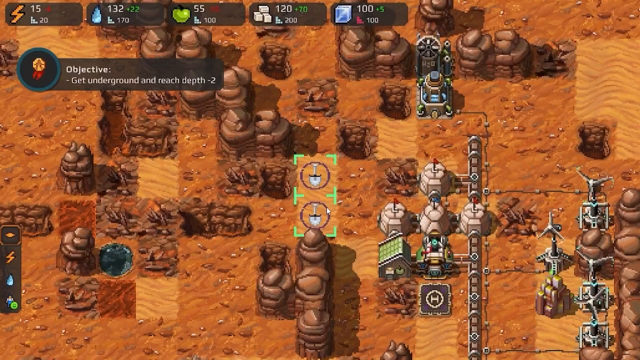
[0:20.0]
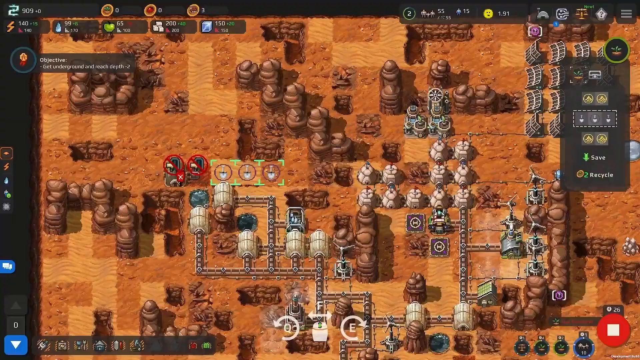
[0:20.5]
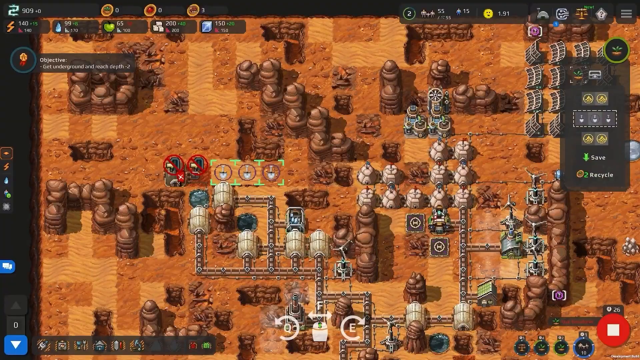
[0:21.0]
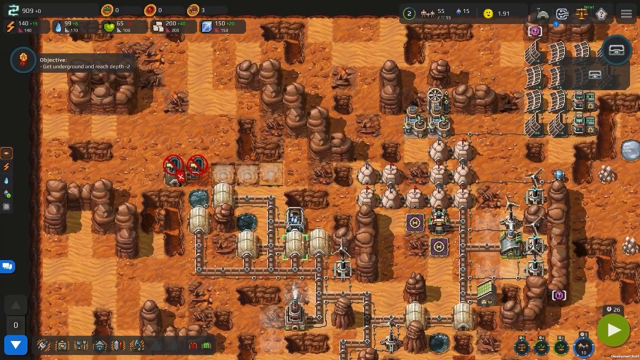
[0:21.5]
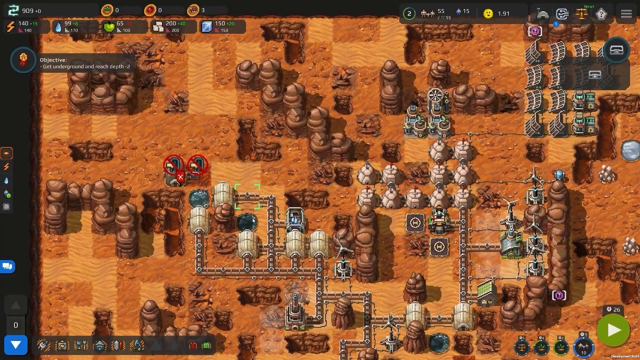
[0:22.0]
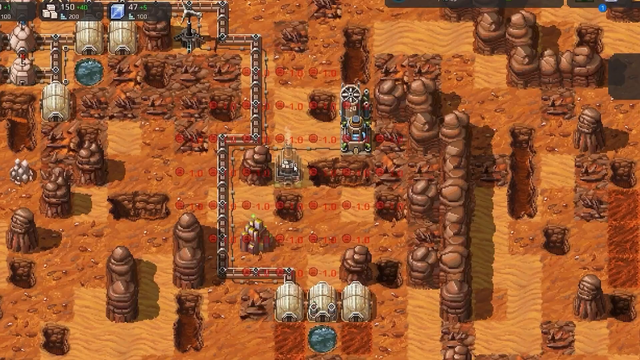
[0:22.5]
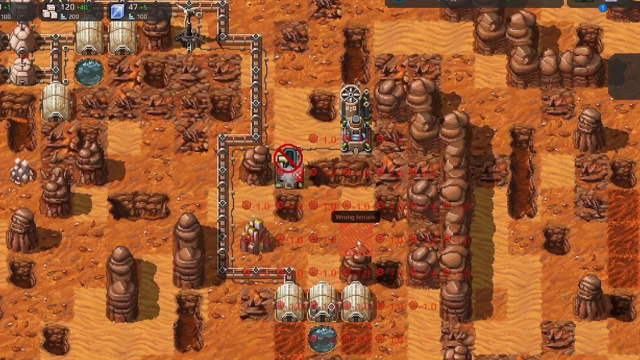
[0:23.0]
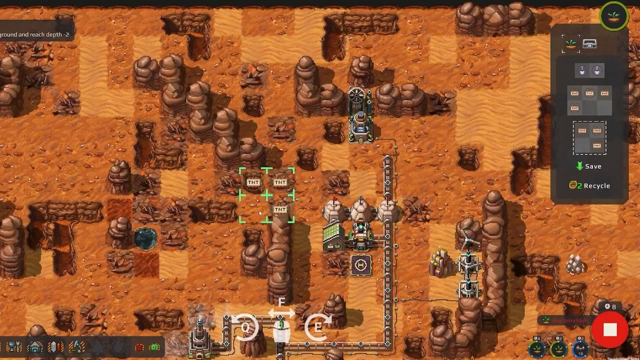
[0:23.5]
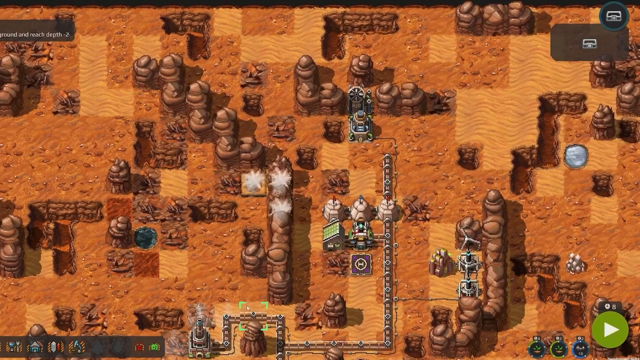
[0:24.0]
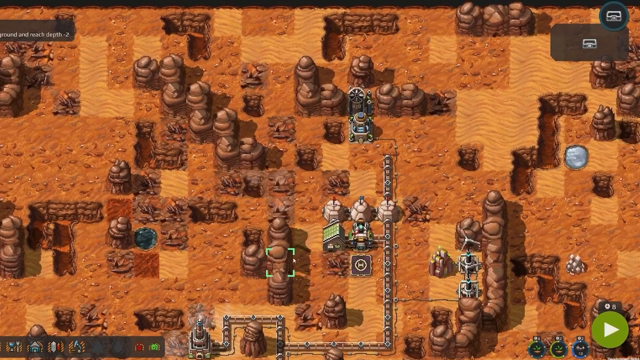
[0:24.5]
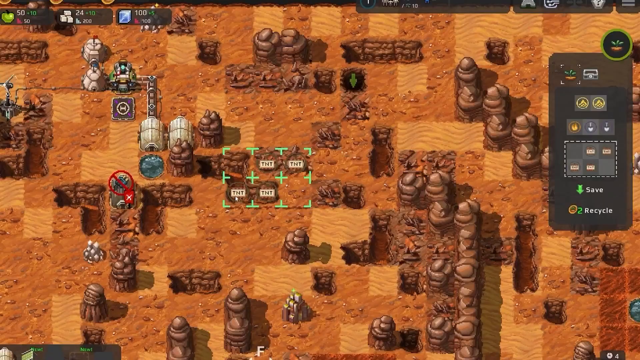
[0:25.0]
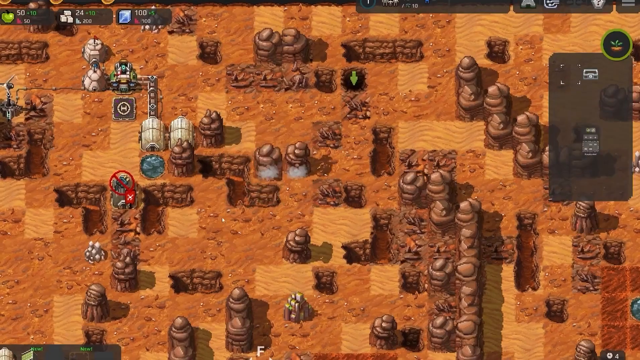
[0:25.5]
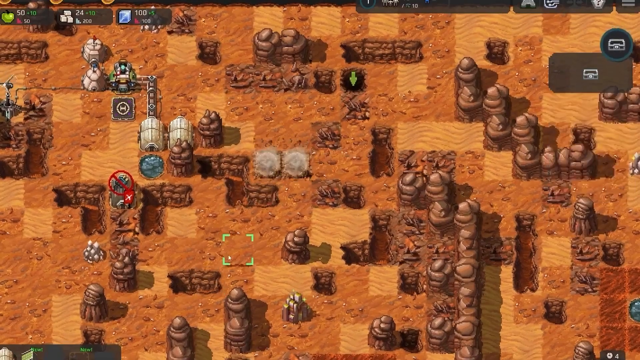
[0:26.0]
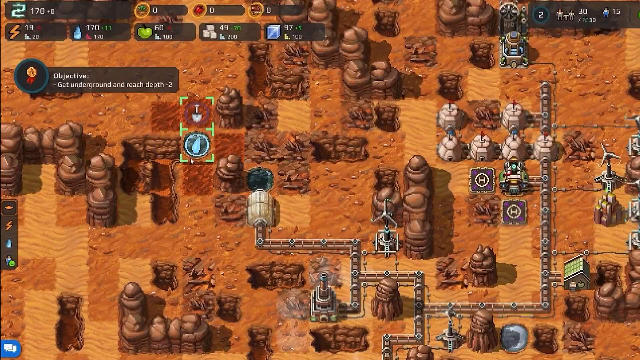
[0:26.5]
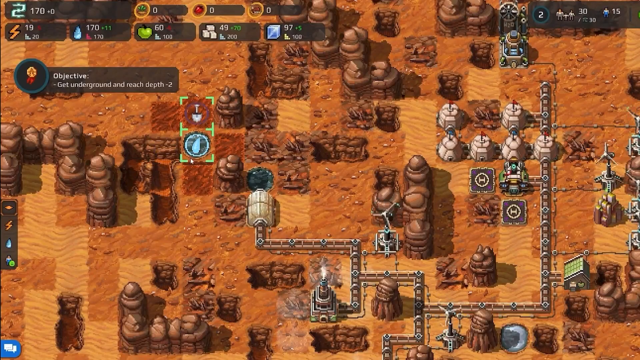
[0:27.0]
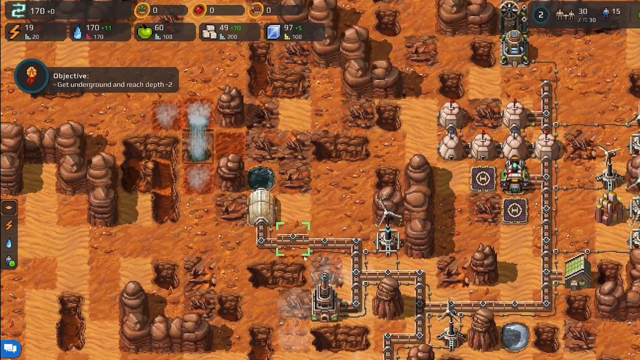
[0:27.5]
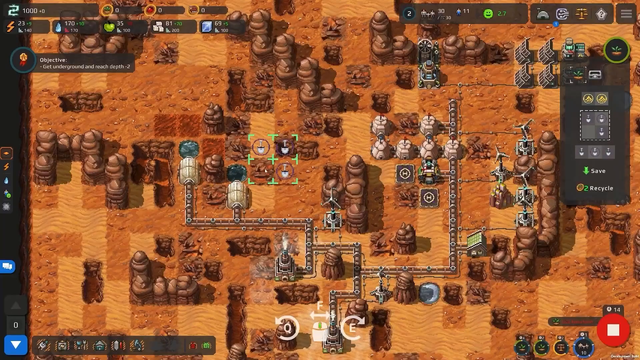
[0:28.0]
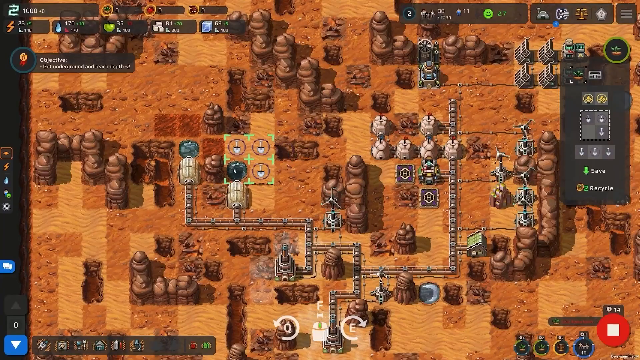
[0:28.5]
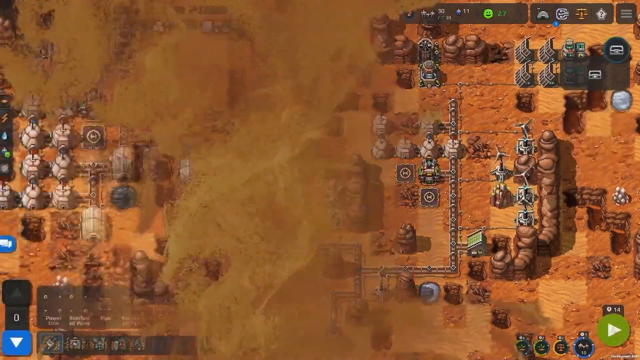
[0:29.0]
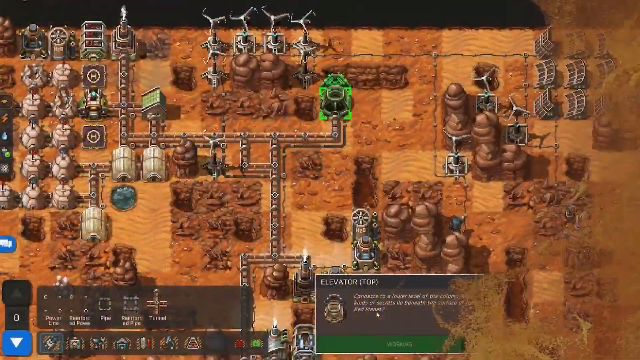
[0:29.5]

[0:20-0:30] The player continues to build and remove things. At one point an option pops up to use TNT on whatever they are looking at. A marker in the top left at the start reads "objective, get underground and reach depth minus two", so the game appears to be a mining or factory type of game. A couple of windmills are scattered throughout, probably generating power. Many of the other places look somewhat like base camps, and there is a helicopter pad as well.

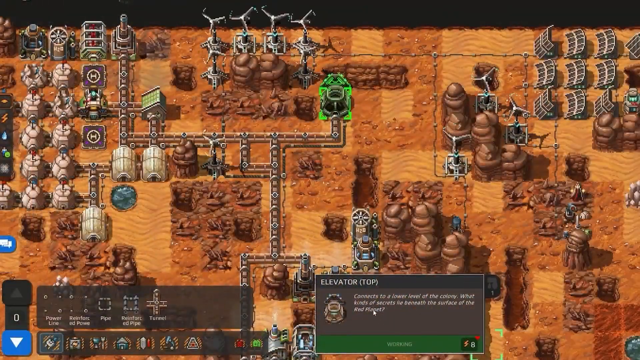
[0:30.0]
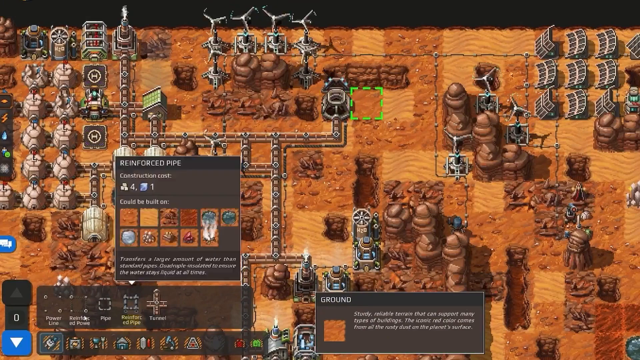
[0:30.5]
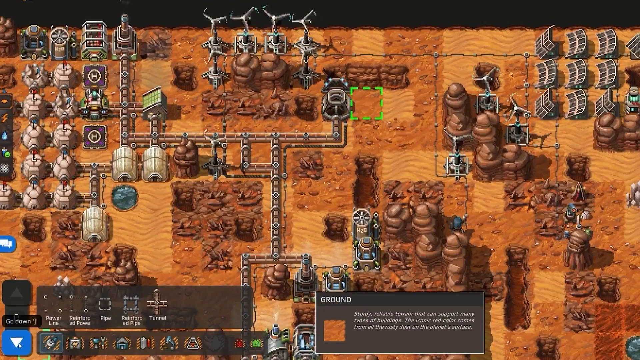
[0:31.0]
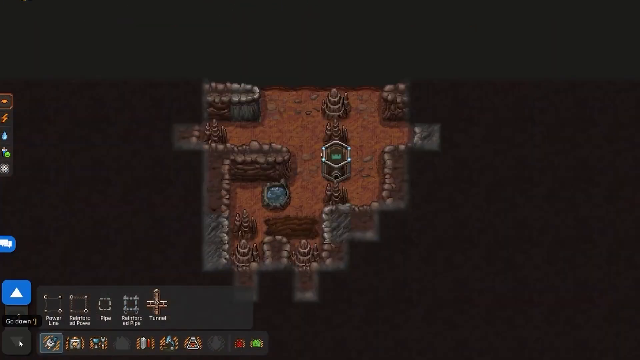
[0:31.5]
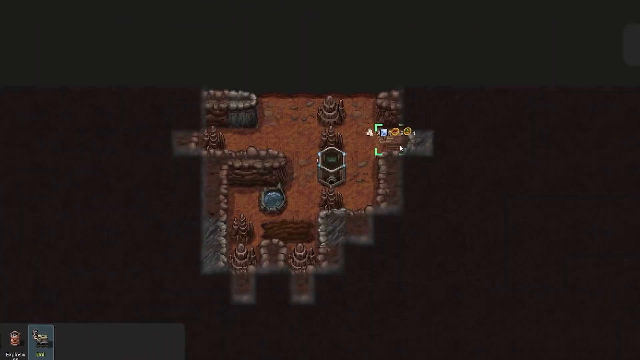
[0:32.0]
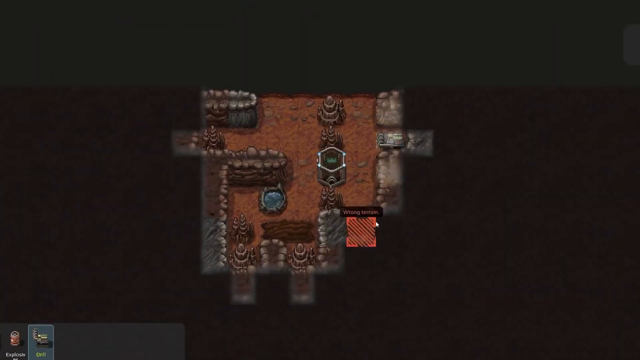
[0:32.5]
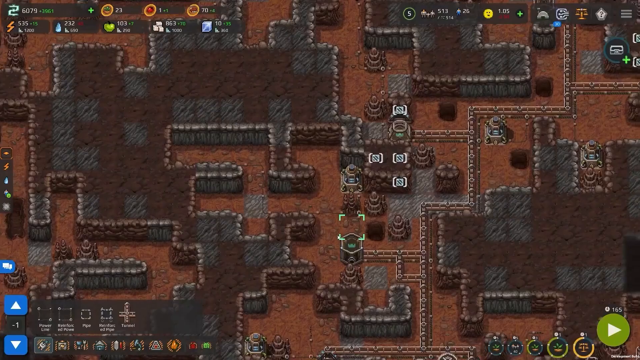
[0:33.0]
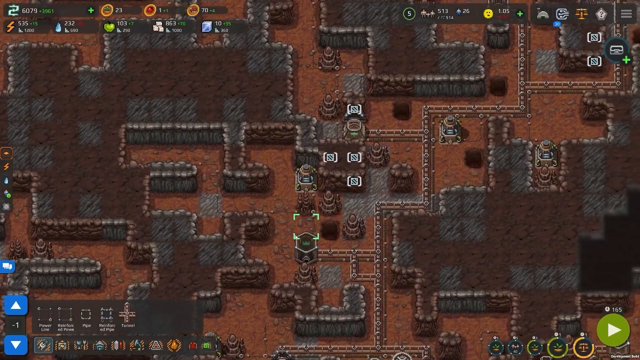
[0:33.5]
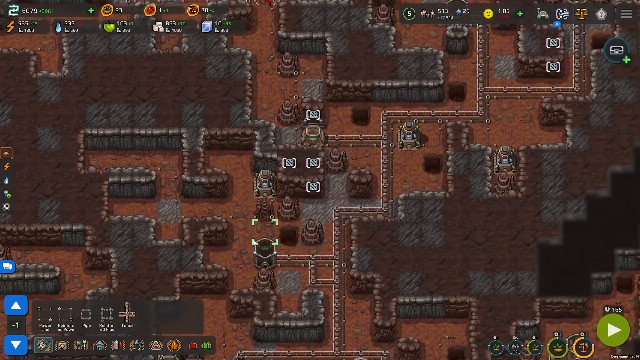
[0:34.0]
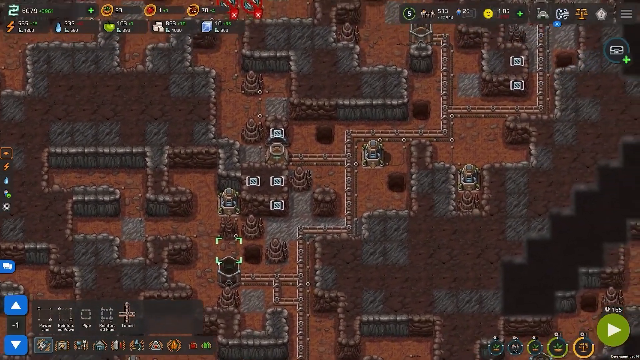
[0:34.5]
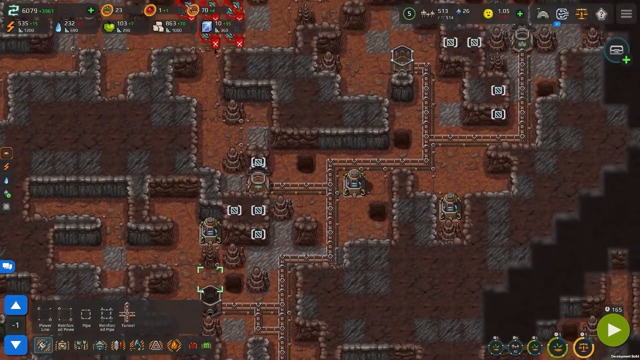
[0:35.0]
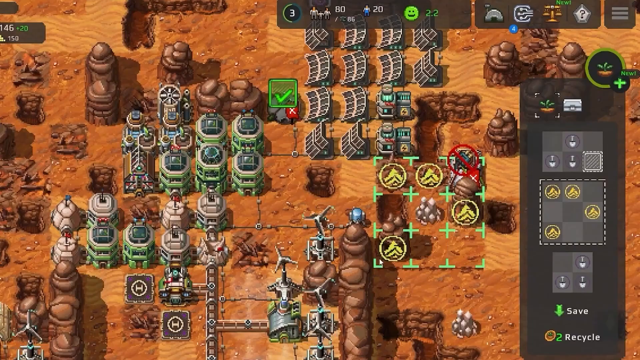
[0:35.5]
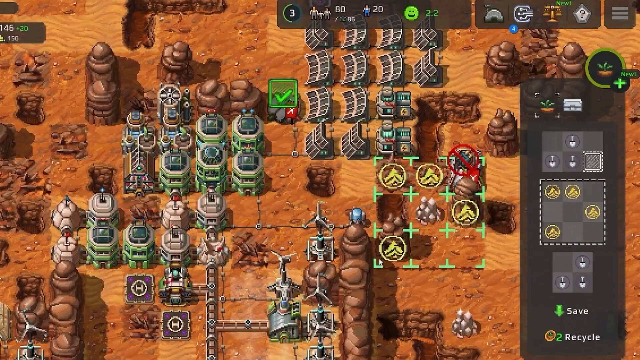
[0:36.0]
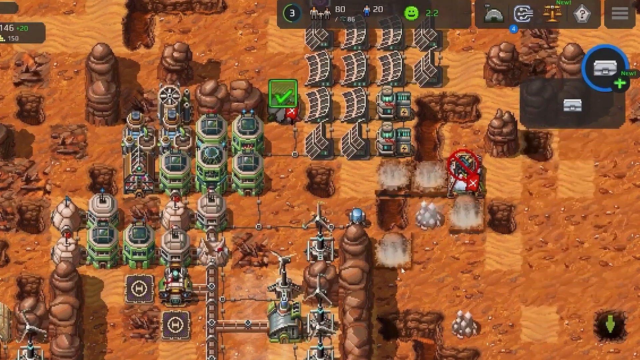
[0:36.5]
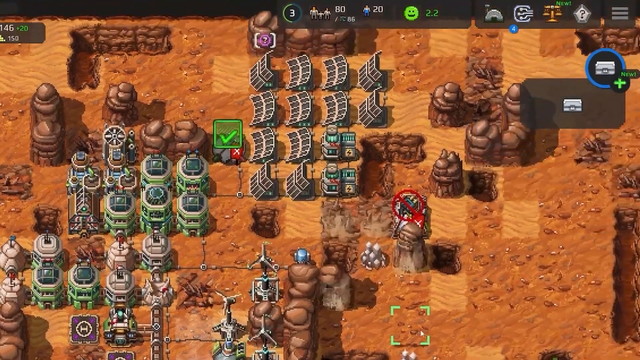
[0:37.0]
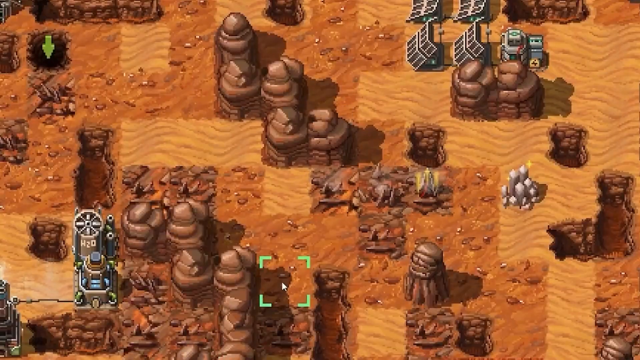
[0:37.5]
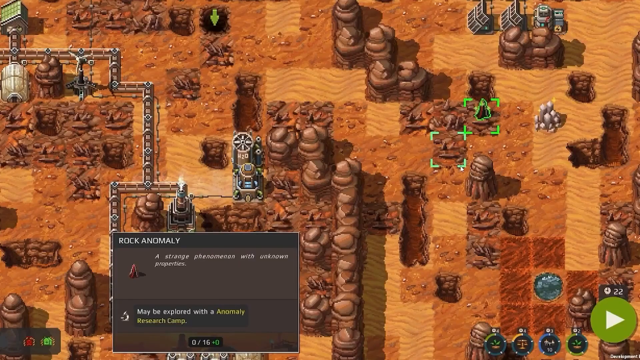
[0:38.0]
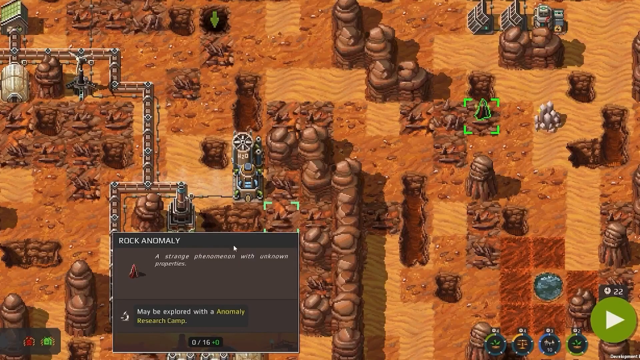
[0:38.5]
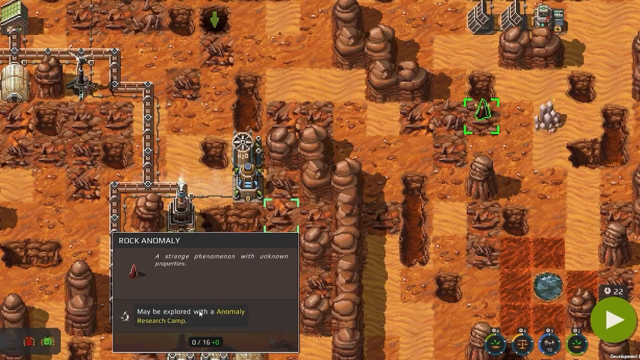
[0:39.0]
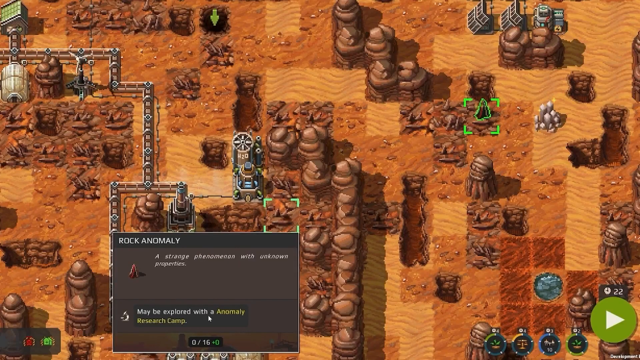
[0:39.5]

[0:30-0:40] The player starts to go underground, and there is very little light, either from a day and night cycle or because it is underground, most likely the latter. A couple of what look like solar panels are on top of the ground. Many windmills are still visible, along with a couple of other little base-camp-looking structures, a couple of helicopter pads and some other unidentified buildings. At the very top, the UI shows money, apparently food, minerals, possibly salt, water, power and other resources. There is also a section that looks to be population, currently at 513, suggesting a city builder game set on a different planet.